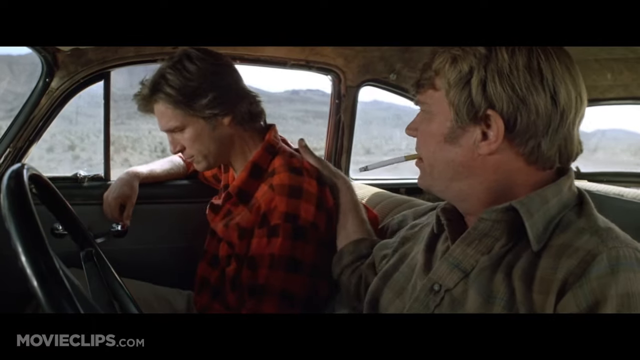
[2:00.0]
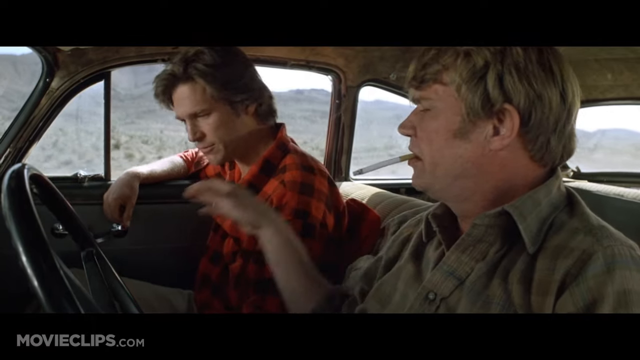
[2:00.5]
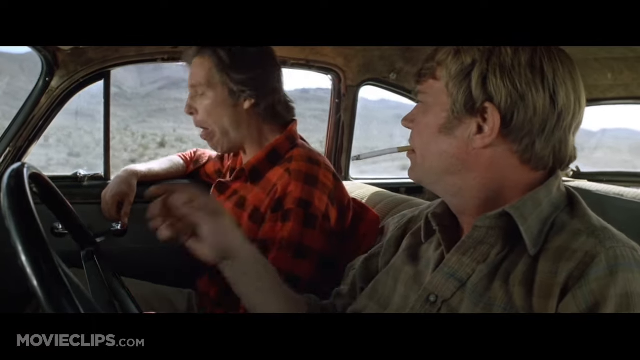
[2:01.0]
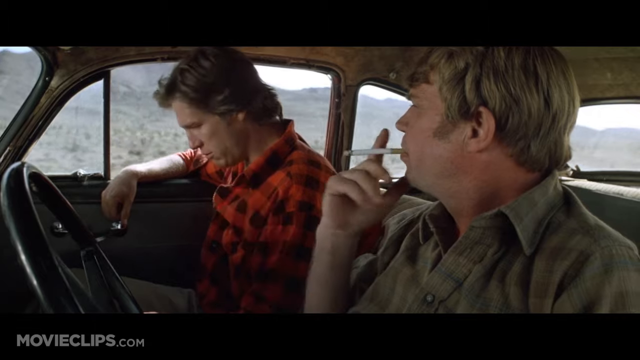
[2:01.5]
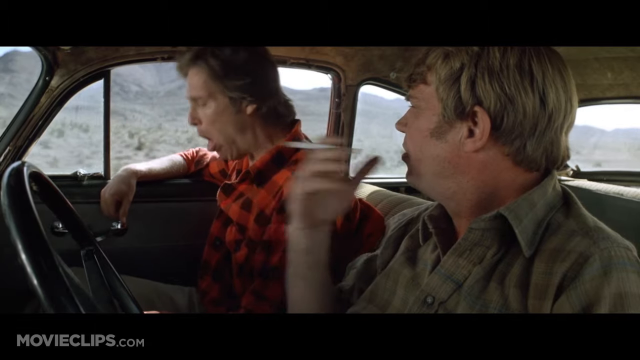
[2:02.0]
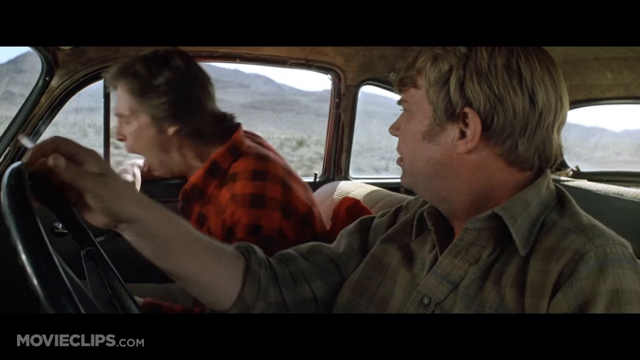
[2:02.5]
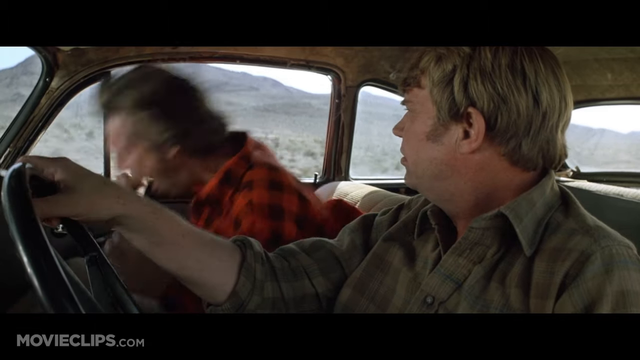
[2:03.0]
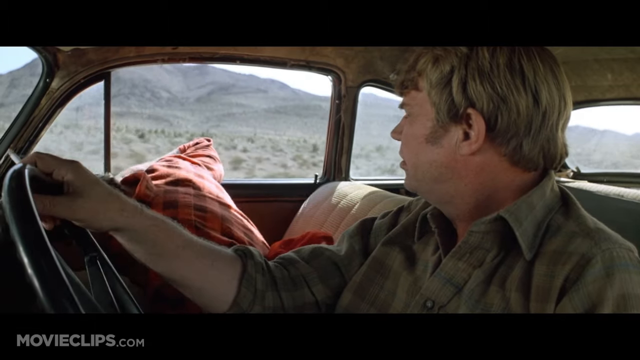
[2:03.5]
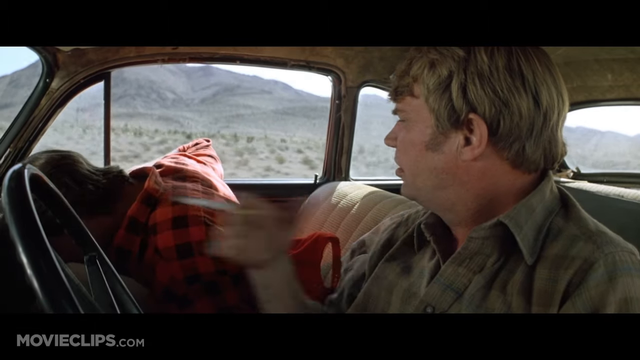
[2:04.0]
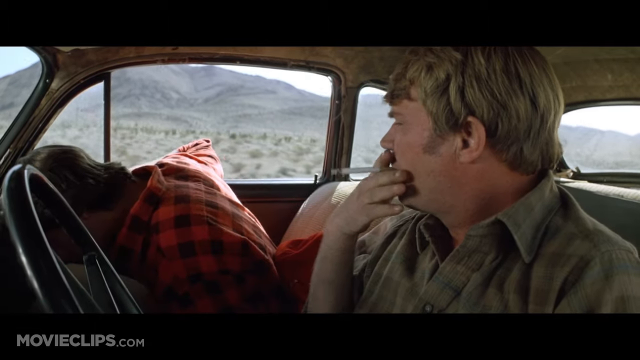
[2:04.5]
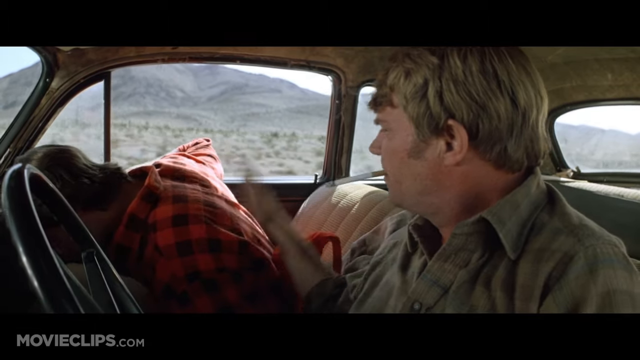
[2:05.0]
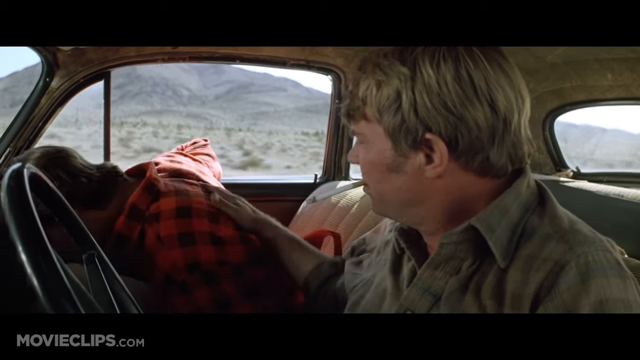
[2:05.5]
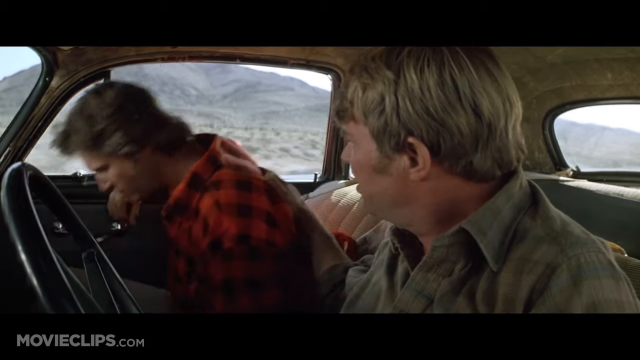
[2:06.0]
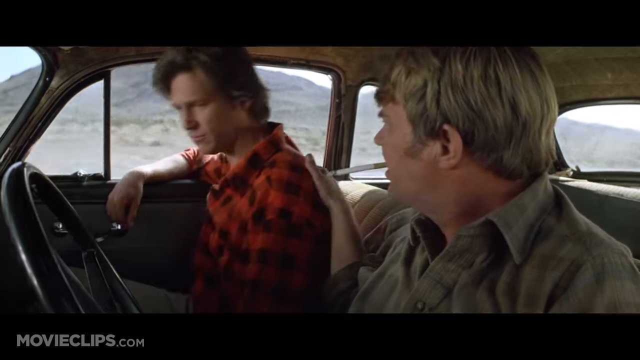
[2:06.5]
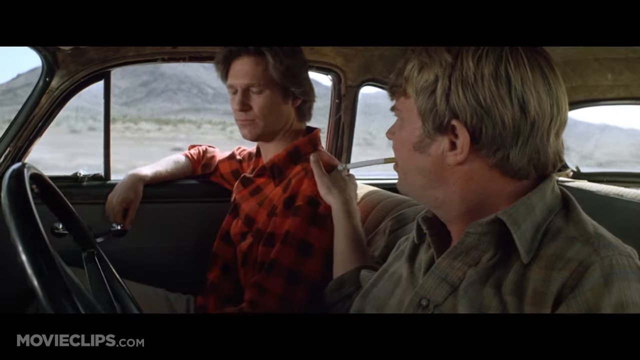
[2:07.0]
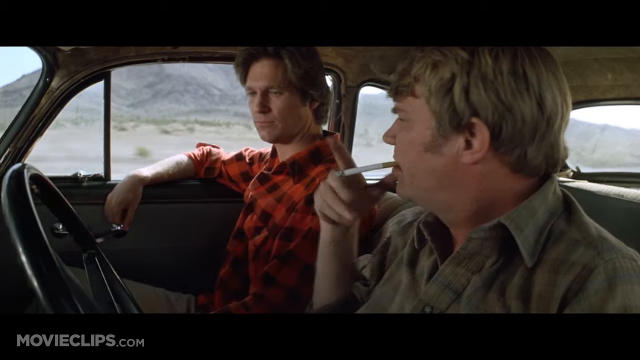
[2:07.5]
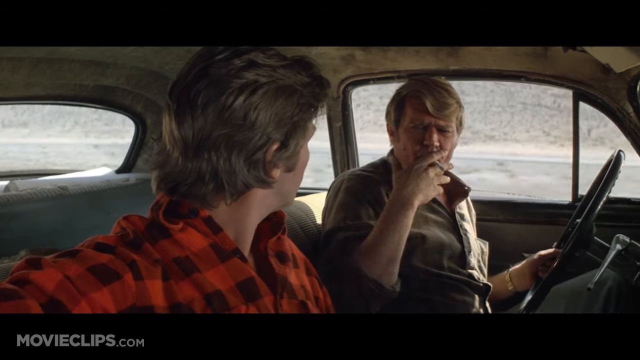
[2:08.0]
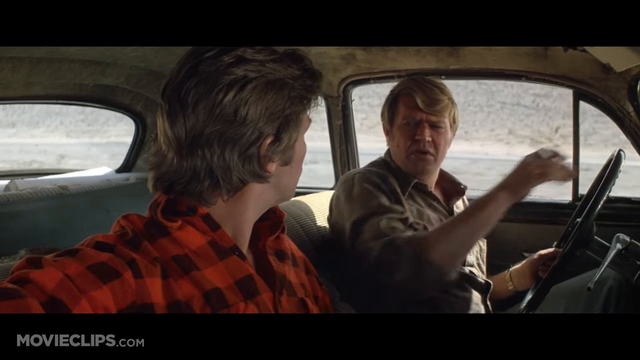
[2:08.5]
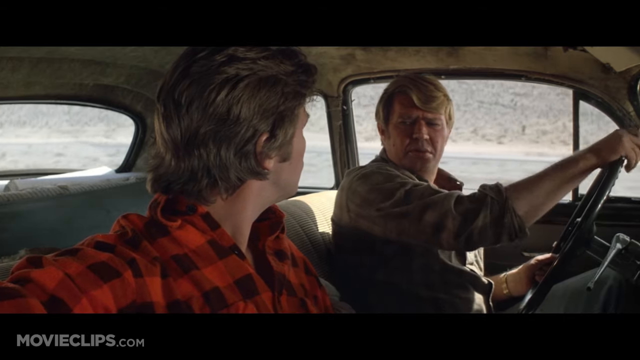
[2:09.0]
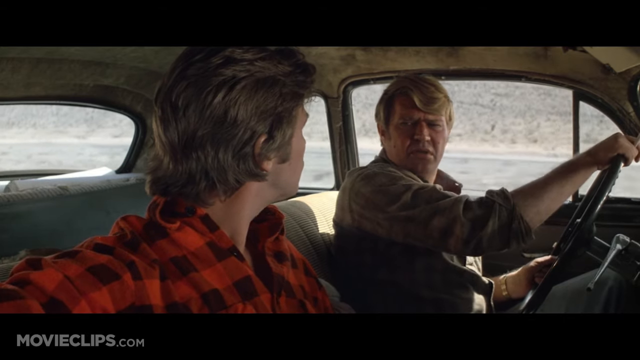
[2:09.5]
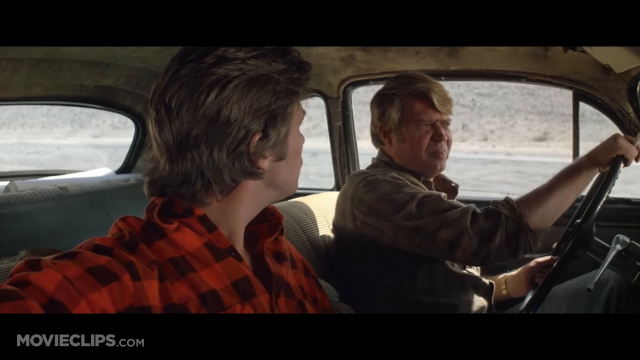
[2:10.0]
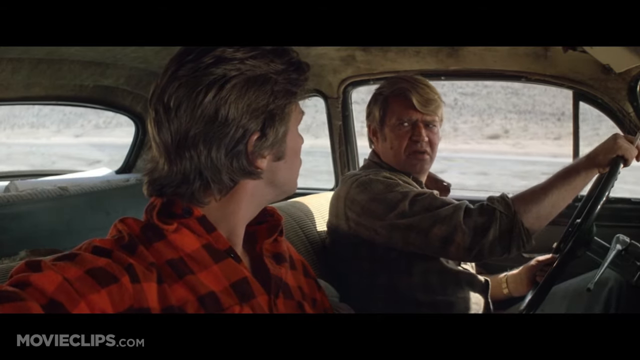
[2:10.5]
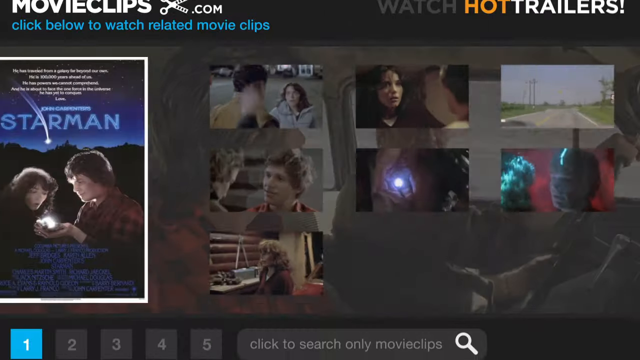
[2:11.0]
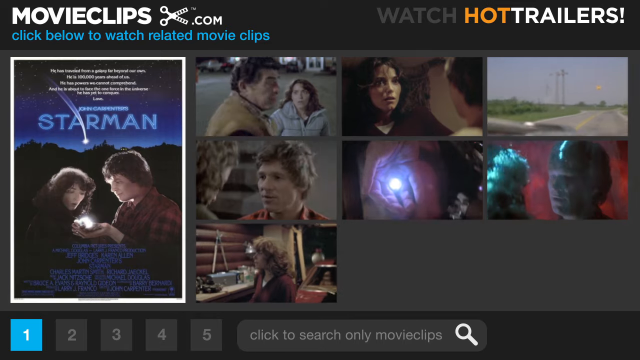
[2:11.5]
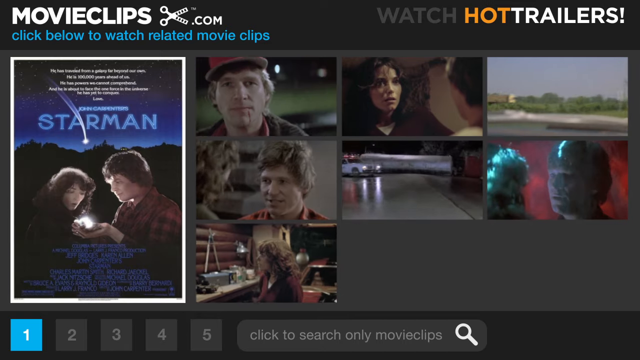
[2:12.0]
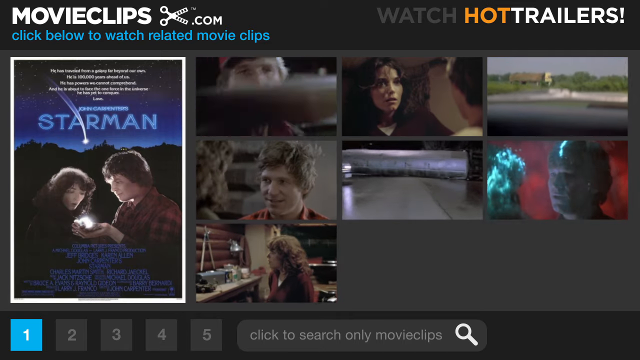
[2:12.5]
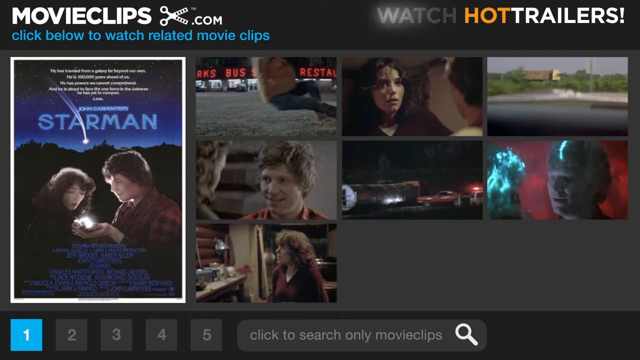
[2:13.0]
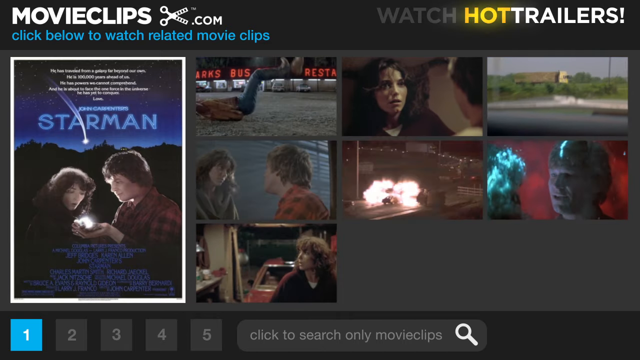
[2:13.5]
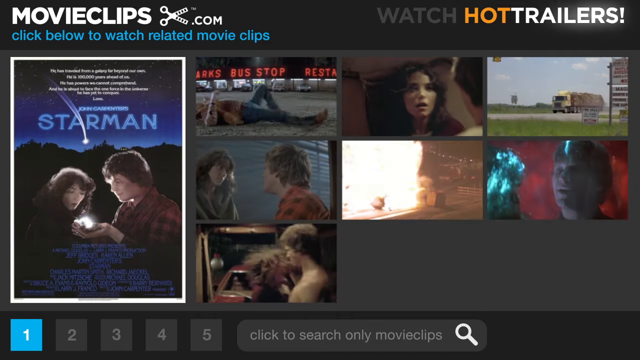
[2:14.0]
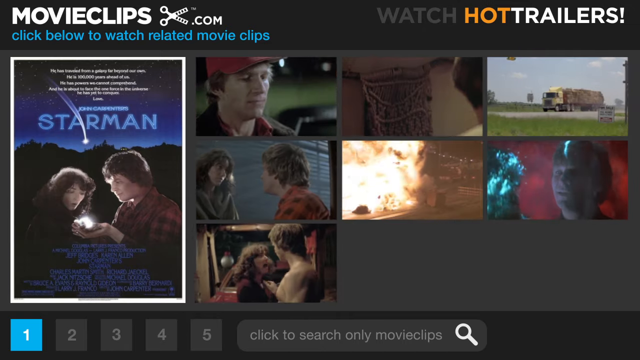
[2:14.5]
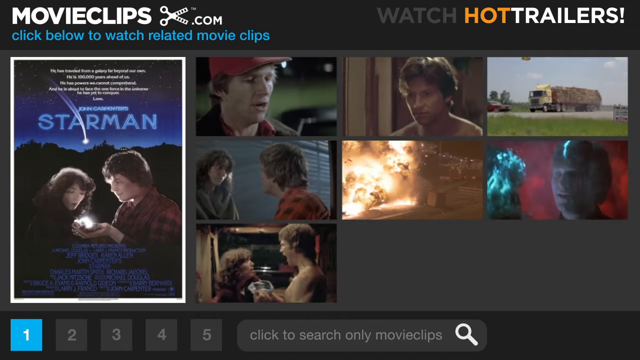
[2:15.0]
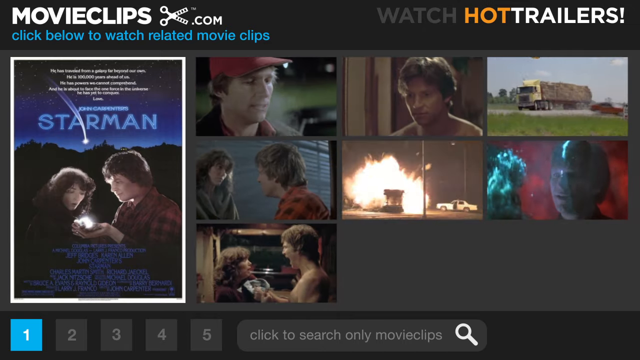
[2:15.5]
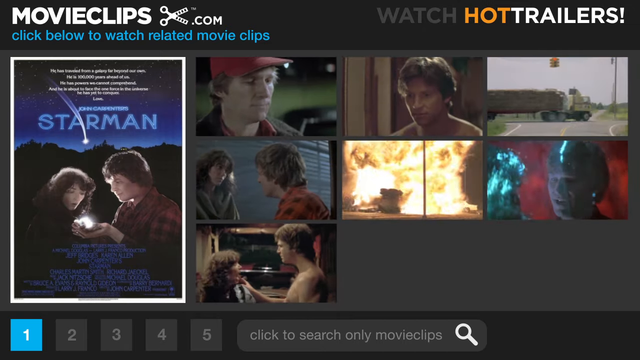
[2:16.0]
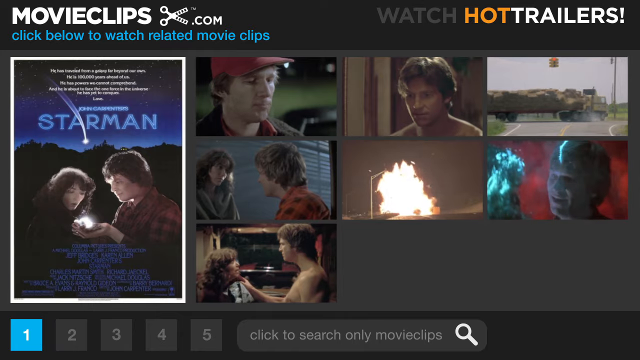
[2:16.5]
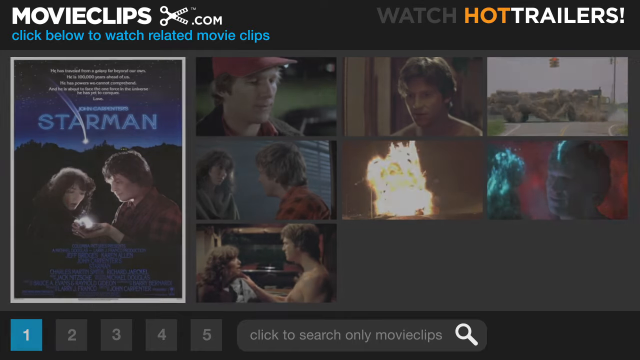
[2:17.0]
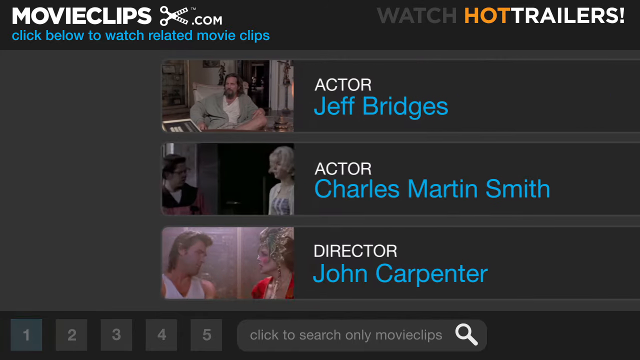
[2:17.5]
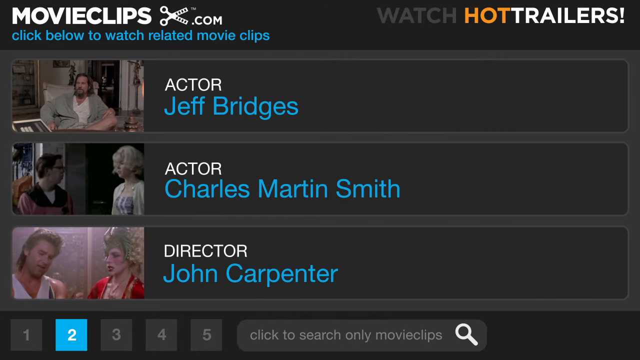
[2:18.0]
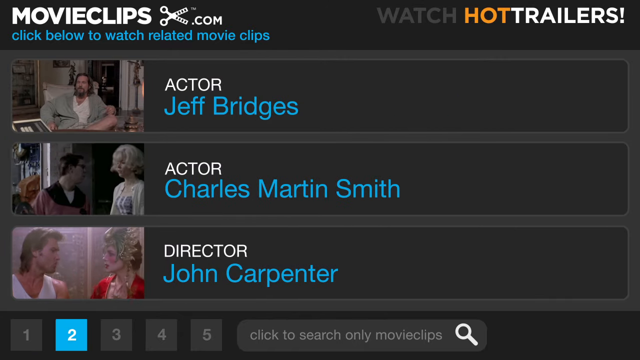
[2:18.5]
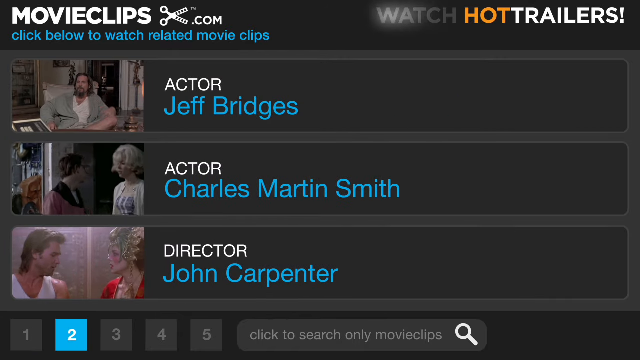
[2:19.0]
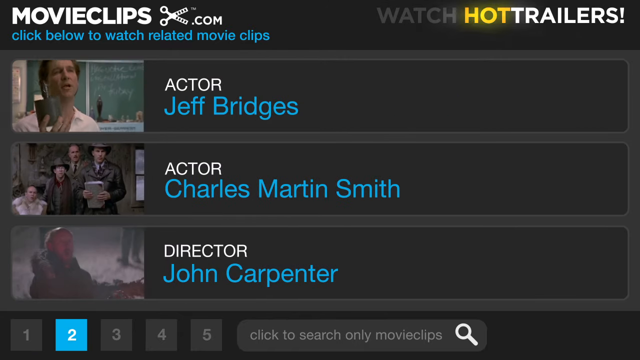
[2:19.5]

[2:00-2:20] The young man coughs violently and puts his head on the dashboard while the older man tries to calm him down. The video then shows text that reads "watch trailers, movie clips". The preceding footage seems to come from movie clips of old movies, apparently made long ago, judging by the not-so-great video quality. Near the end, a couple of videos appear with "movie clips" written on them, like a collection from which to choose one to play.